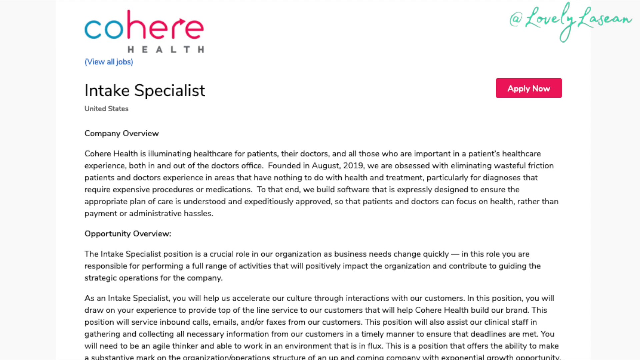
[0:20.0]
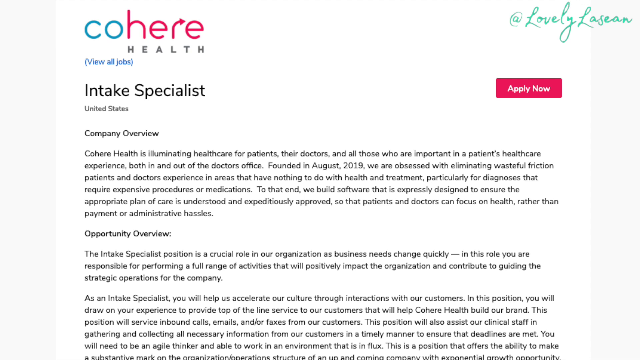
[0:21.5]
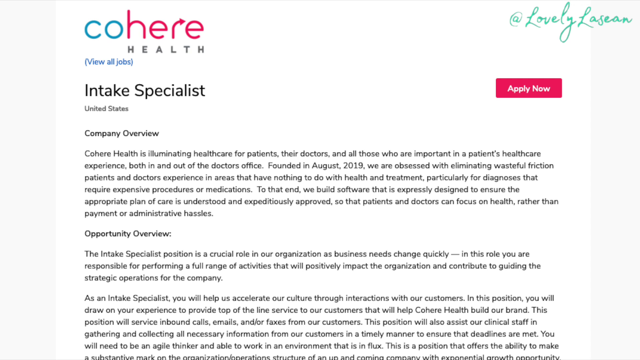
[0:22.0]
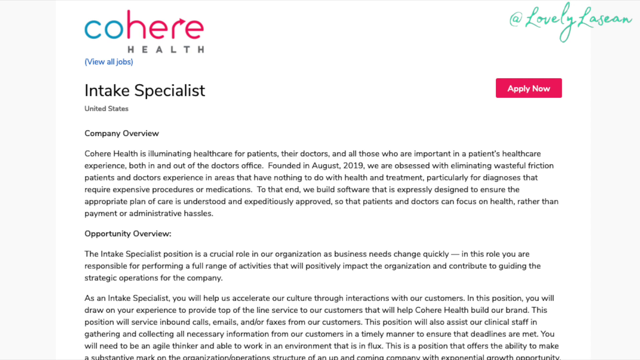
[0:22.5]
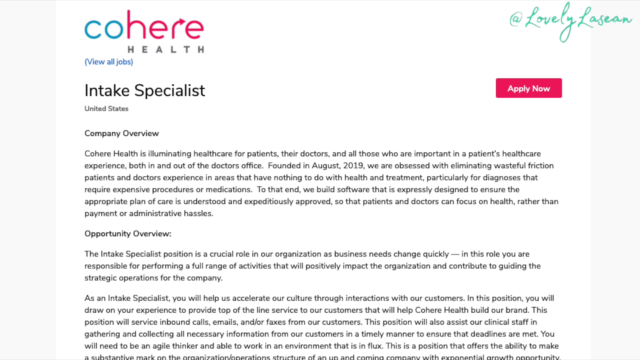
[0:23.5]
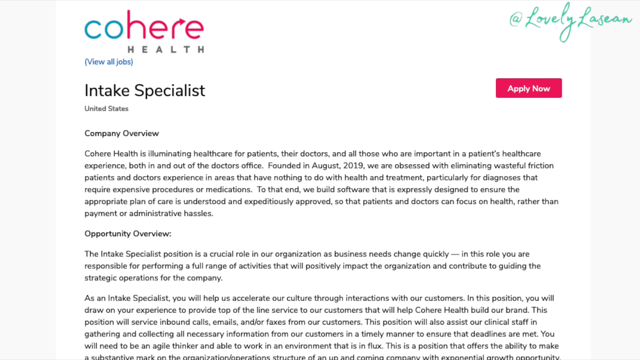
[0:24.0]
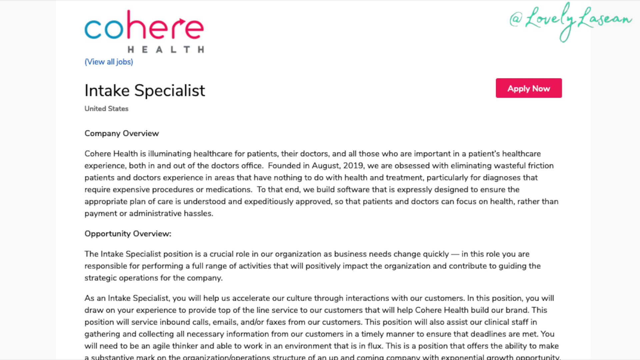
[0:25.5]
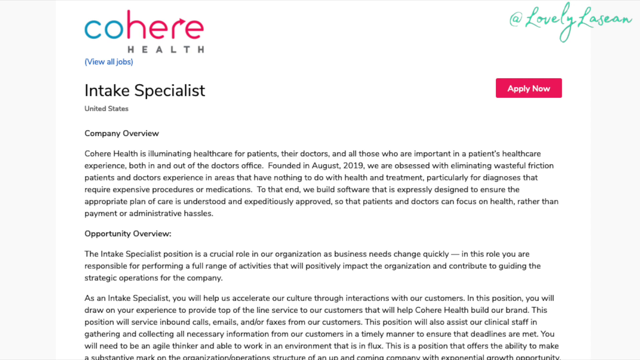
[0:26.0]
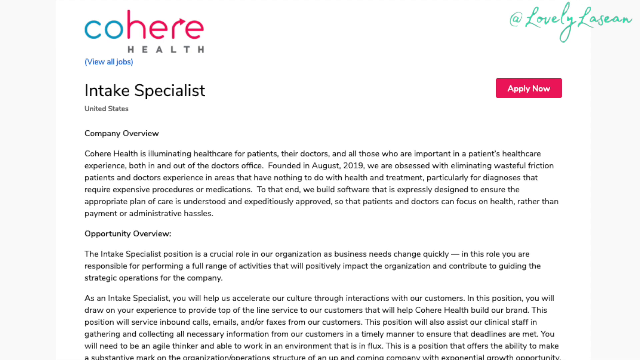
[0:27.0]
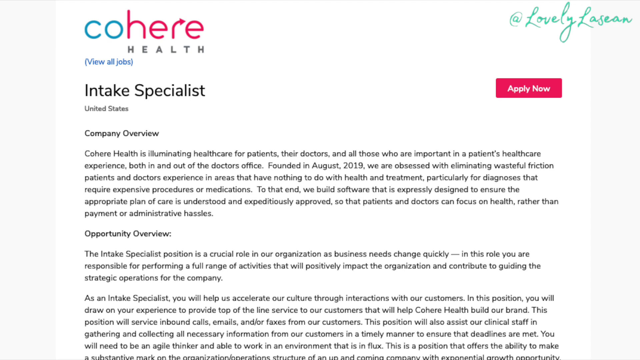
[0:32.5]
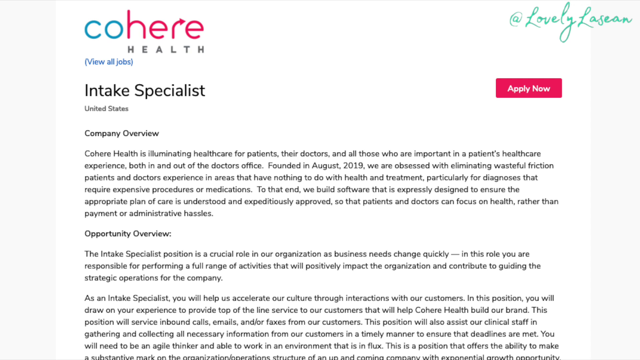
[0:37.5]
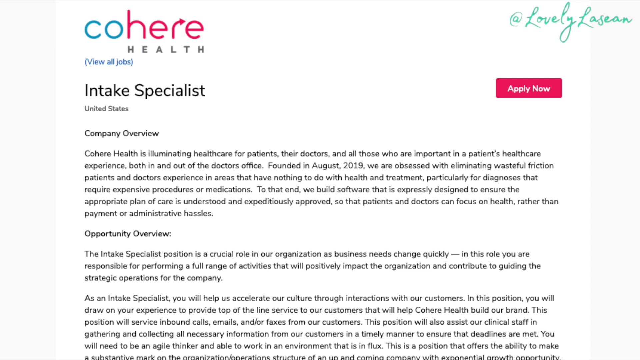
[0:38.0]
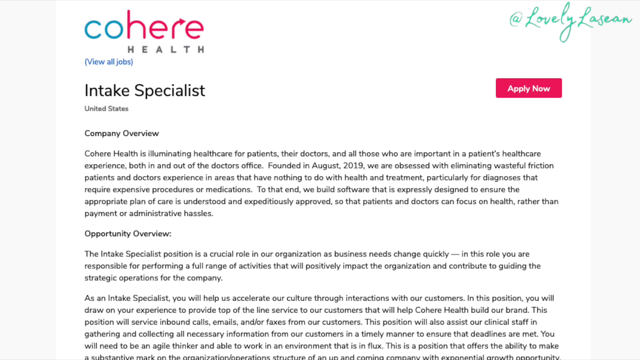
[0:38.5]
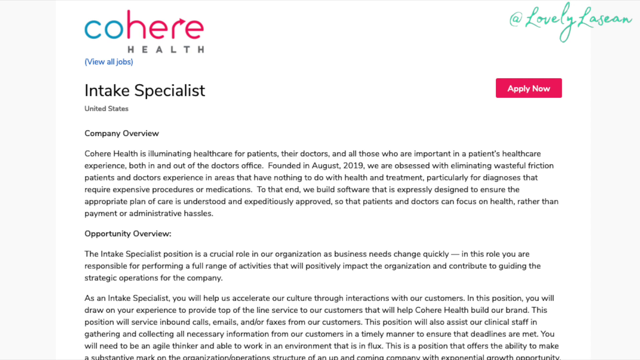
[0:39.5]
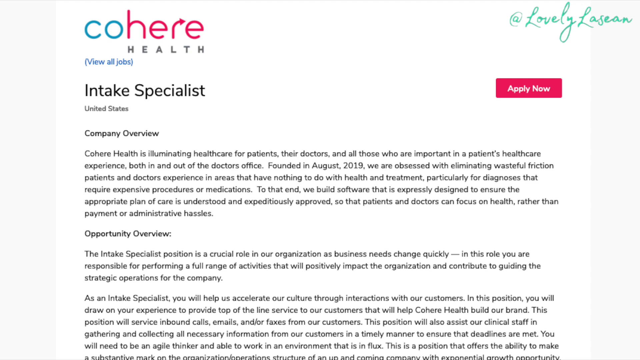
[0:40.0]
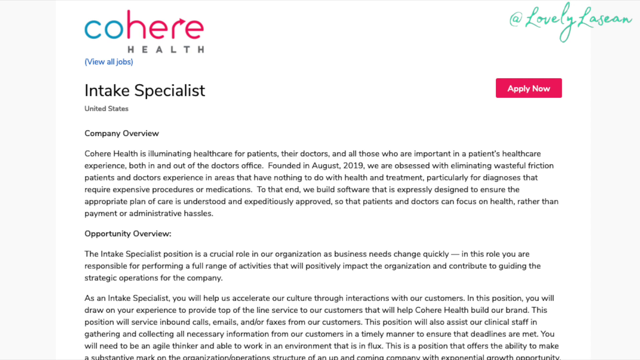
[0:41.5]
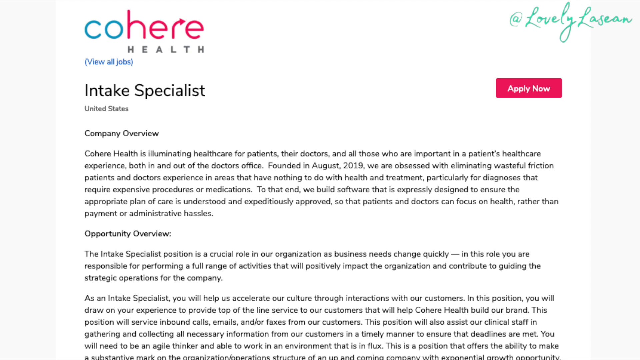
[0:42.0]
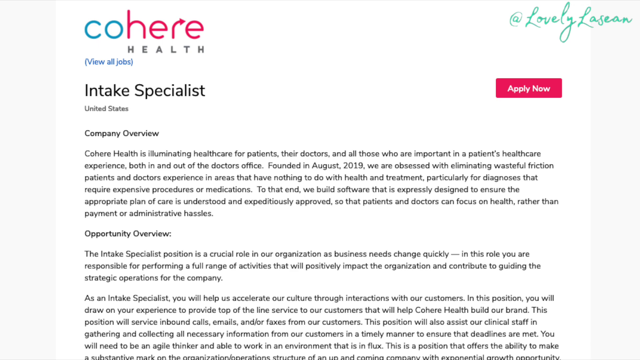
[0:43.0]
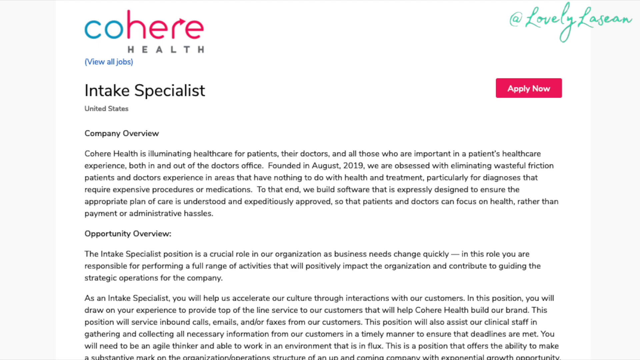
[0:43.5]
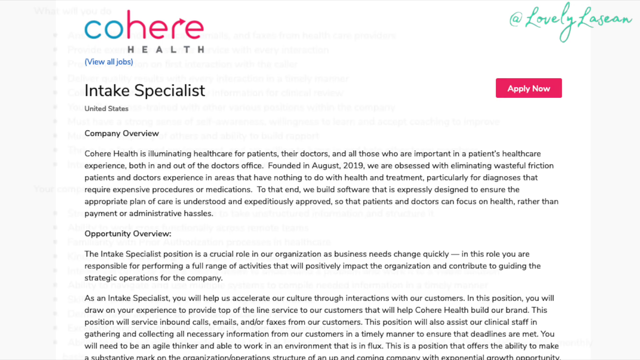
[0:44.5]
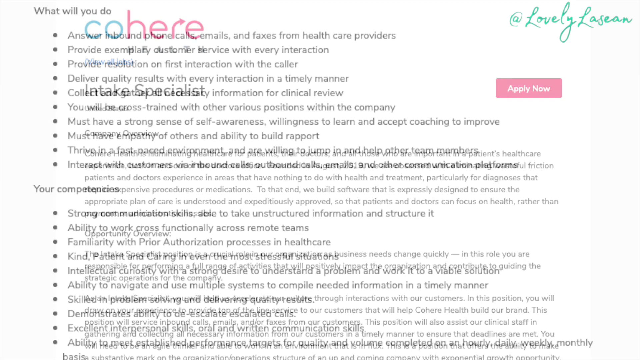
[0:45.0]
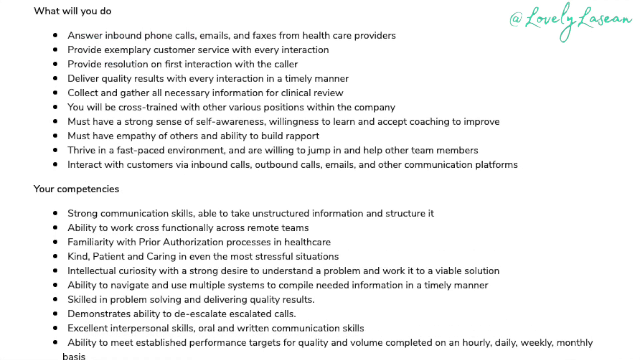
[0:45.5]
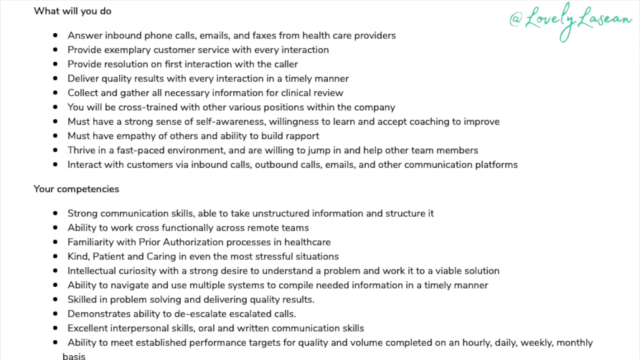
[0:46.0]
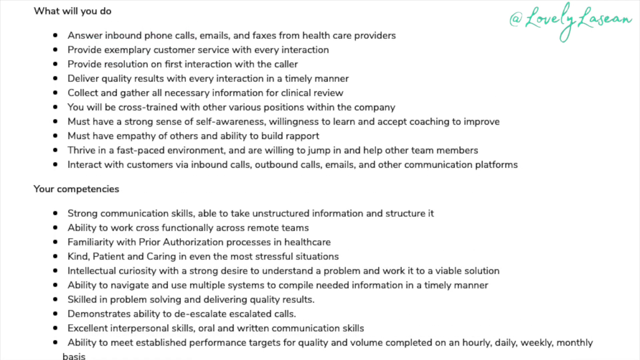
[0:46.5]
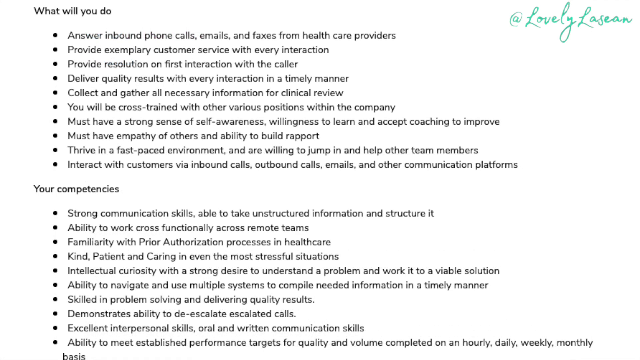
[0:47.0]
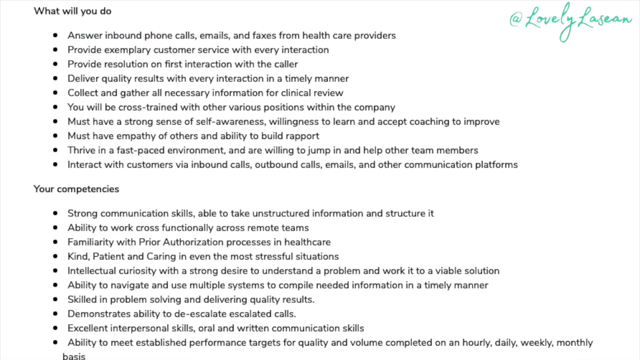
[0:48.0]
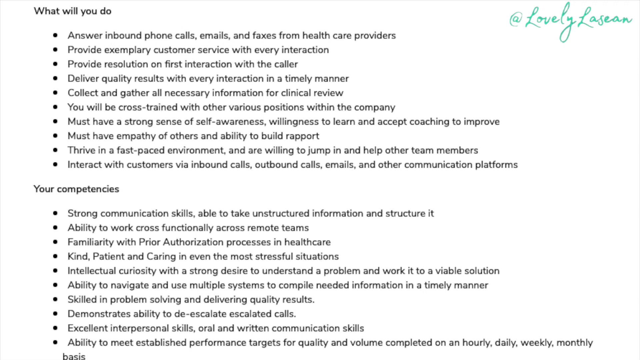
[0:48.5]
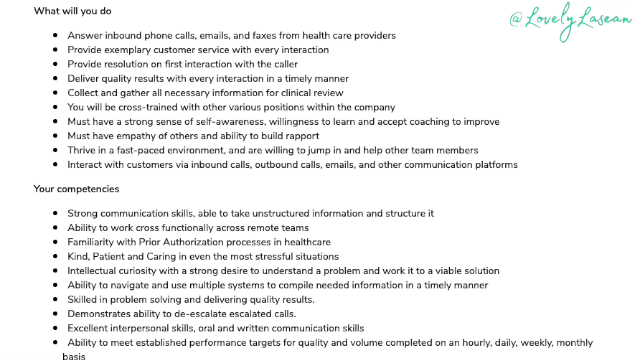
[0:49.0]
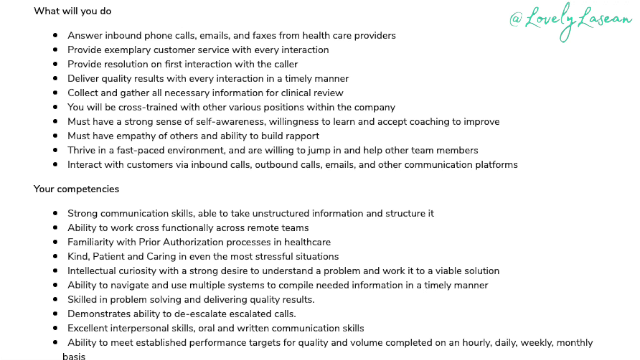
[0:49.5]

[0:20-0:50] A presenter shows the skincare product she is advertising. She appears in three dresses, a green one, an orange one and a brown one, holding the product and lifting it up. The product is called Corehere. The video then moves to a page showing an overview of the app, possibly how the app looks after logging in, with "Cohere Health" written on it. On the left there is a red button reading "Apply Now". The screen says "Intech Specialist", apparently a specialist position that has been posted. A company overview follows, then an opportunity overview, then instructions describing what the person who gets the job will do.